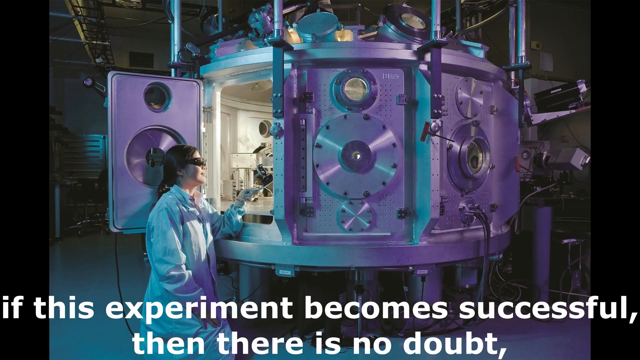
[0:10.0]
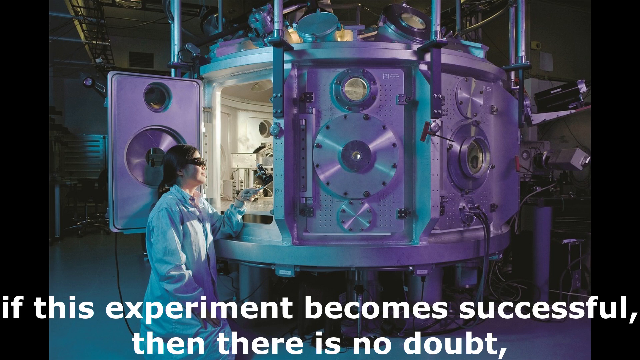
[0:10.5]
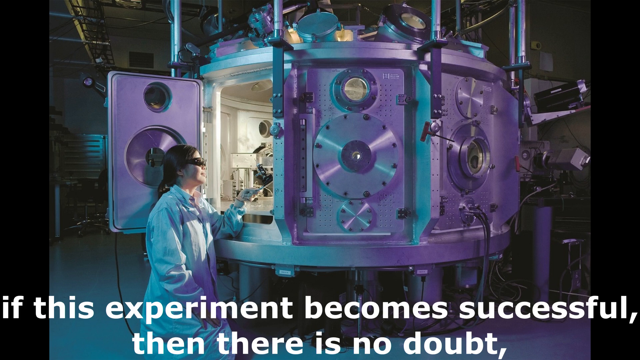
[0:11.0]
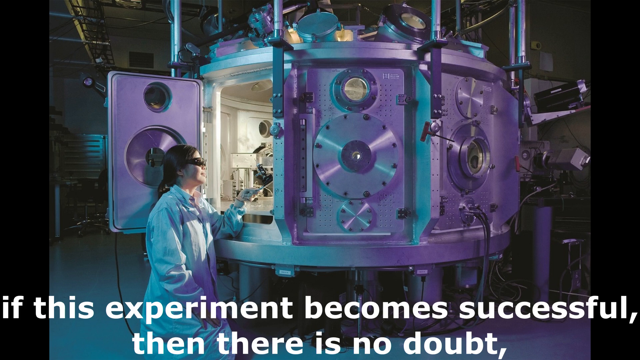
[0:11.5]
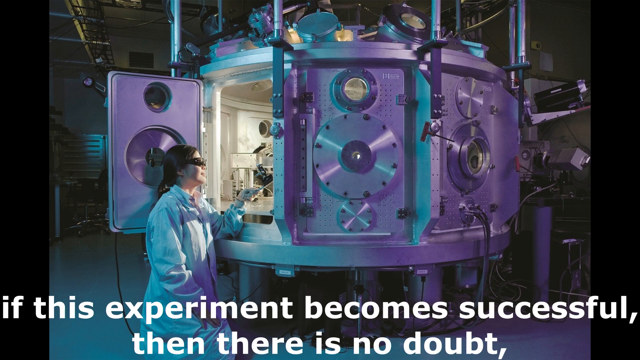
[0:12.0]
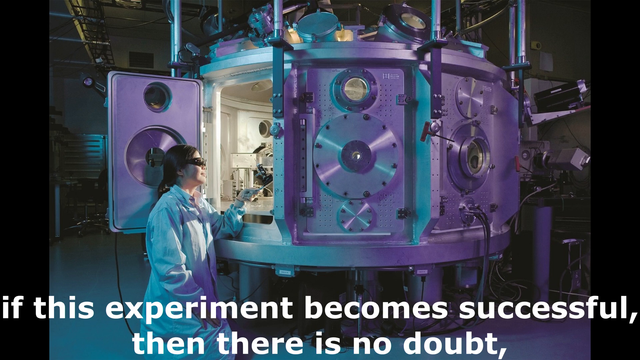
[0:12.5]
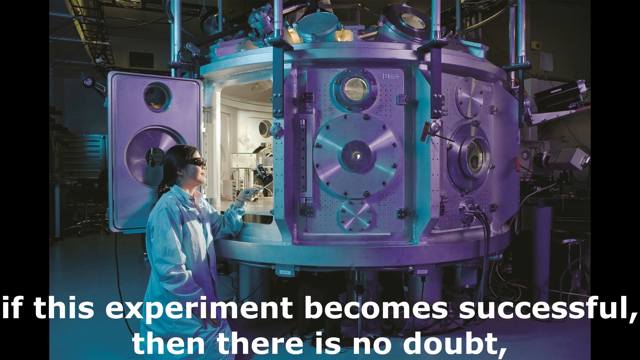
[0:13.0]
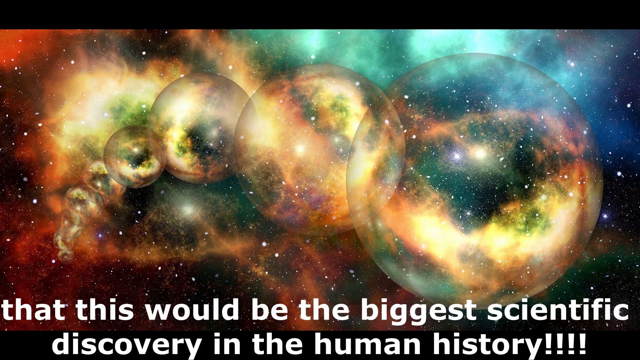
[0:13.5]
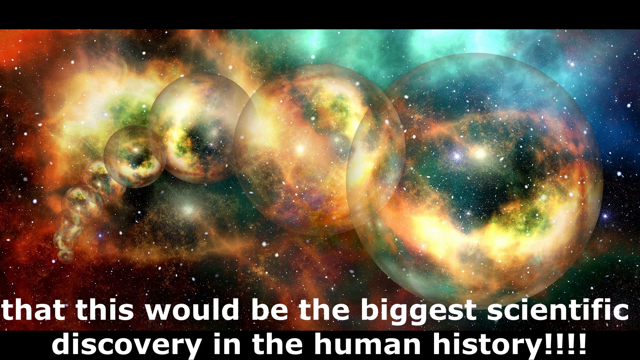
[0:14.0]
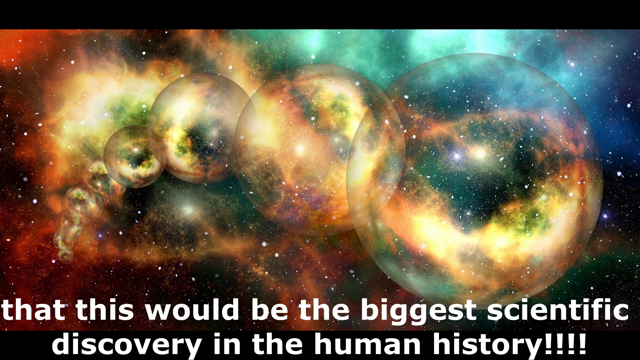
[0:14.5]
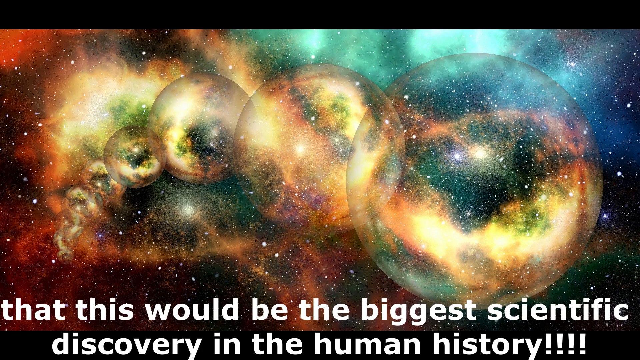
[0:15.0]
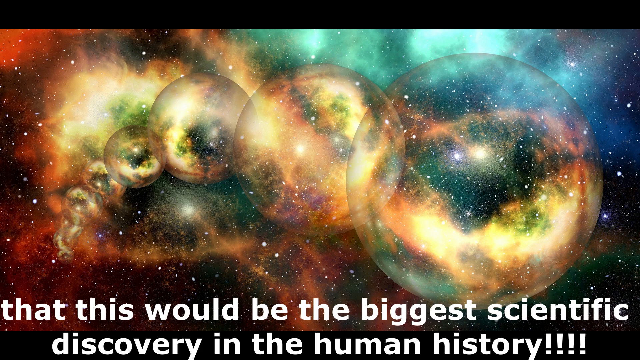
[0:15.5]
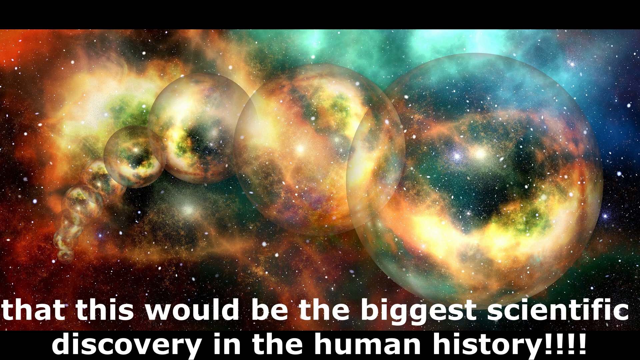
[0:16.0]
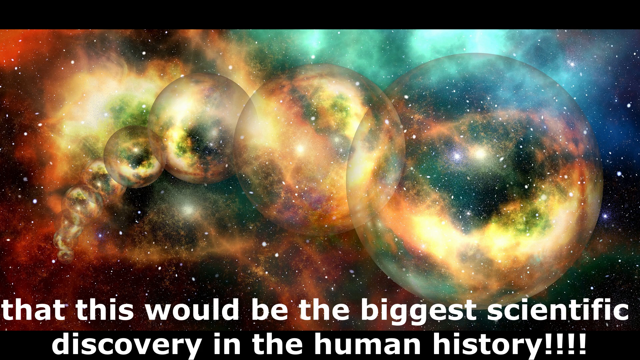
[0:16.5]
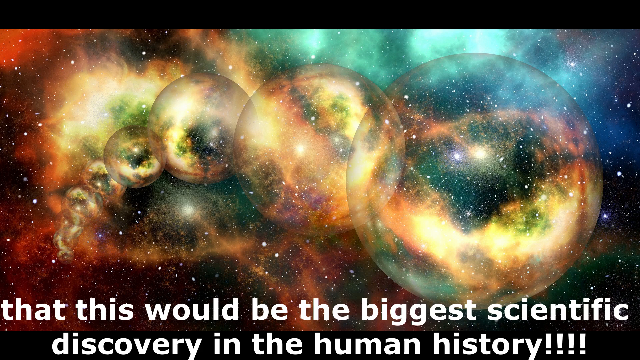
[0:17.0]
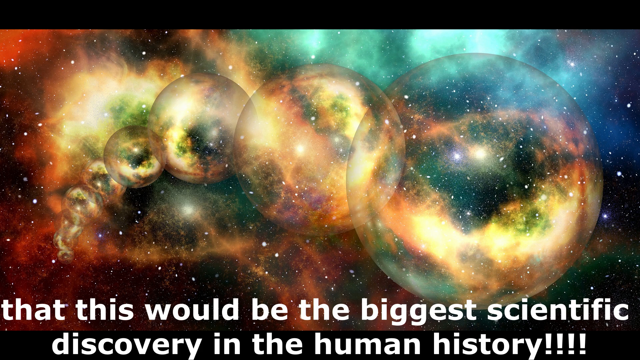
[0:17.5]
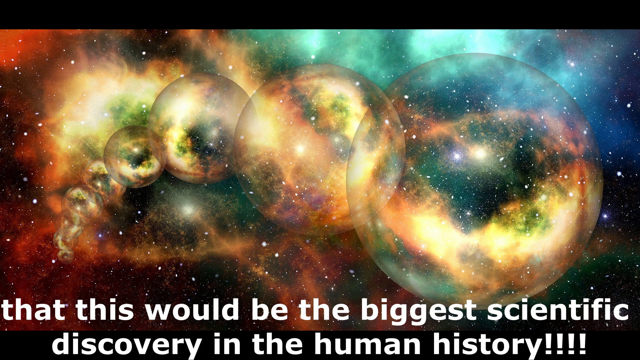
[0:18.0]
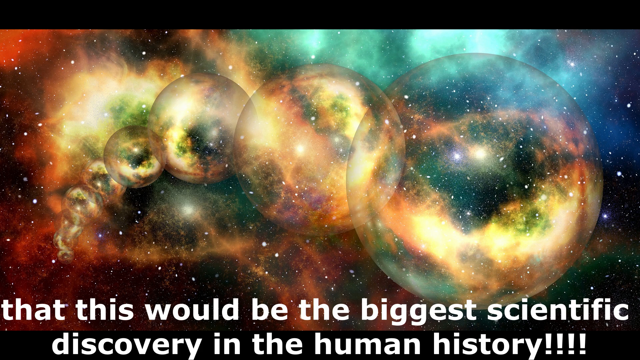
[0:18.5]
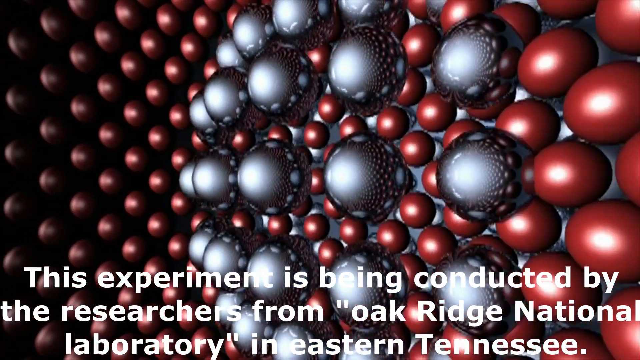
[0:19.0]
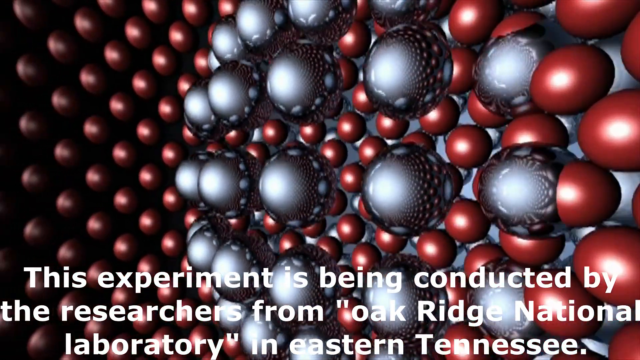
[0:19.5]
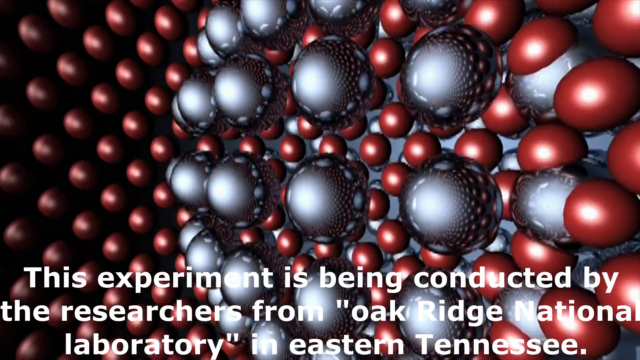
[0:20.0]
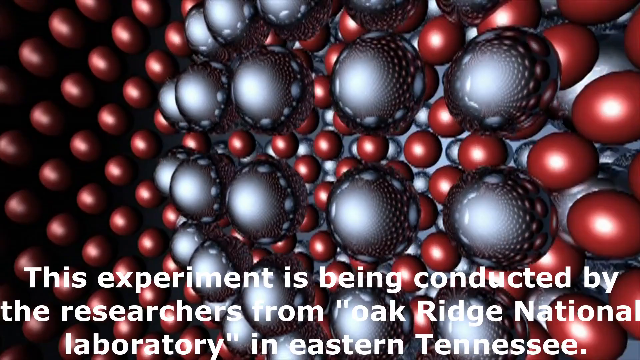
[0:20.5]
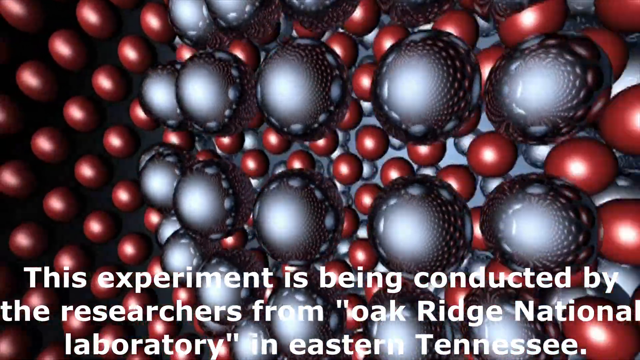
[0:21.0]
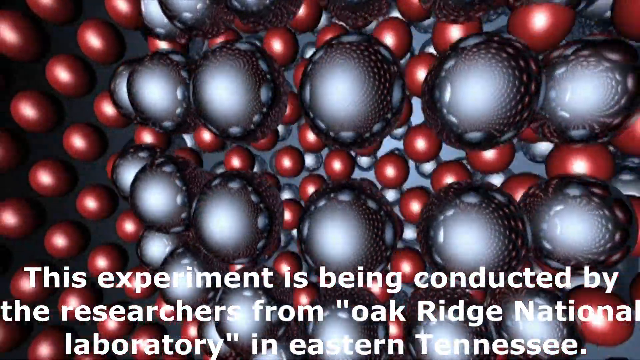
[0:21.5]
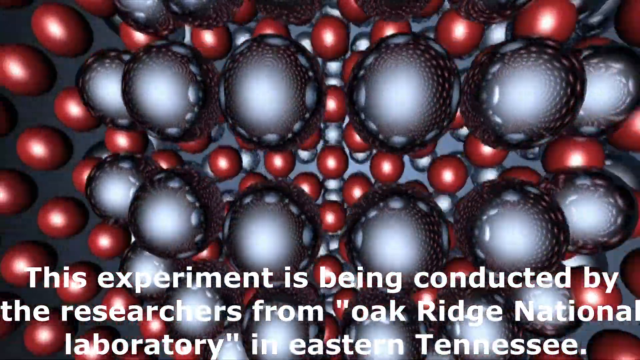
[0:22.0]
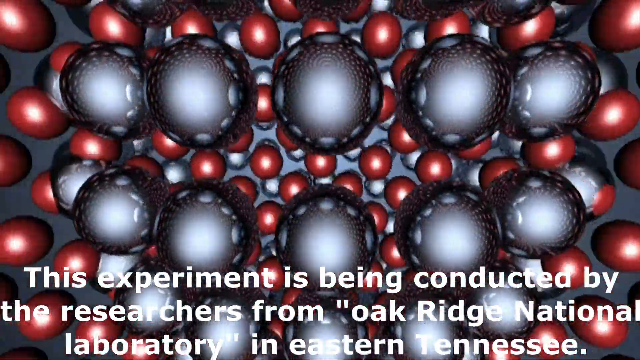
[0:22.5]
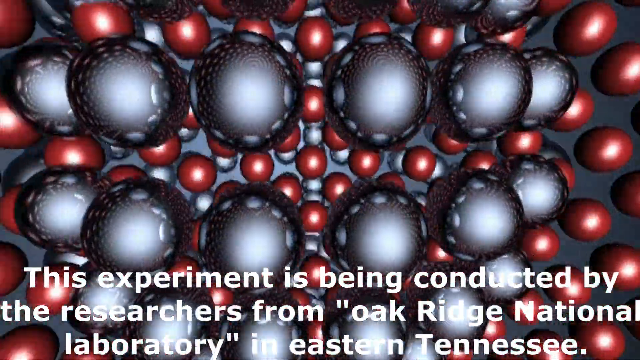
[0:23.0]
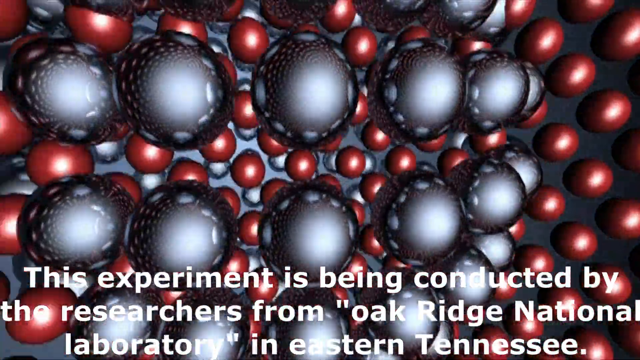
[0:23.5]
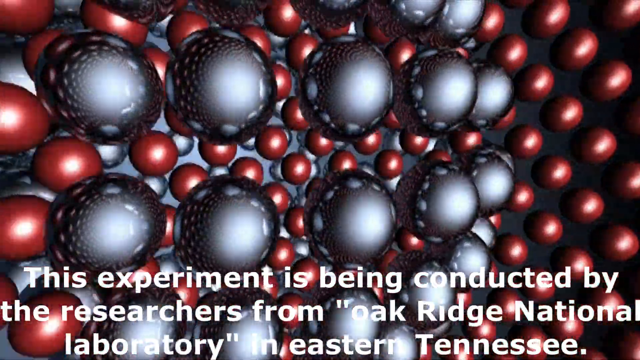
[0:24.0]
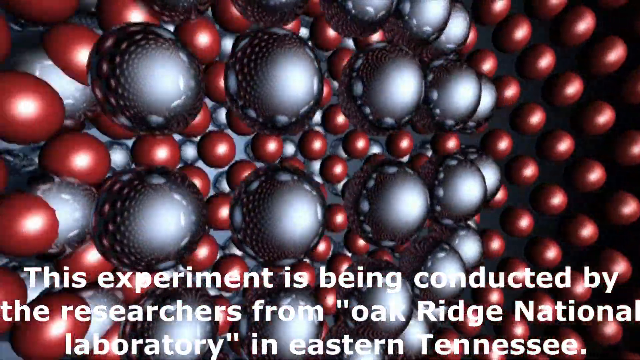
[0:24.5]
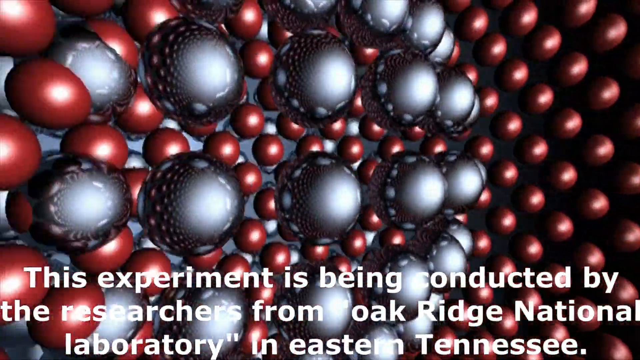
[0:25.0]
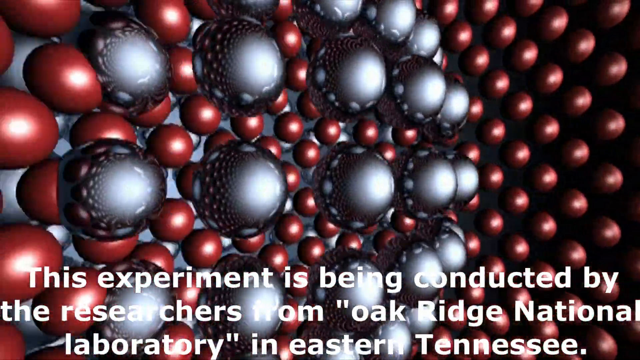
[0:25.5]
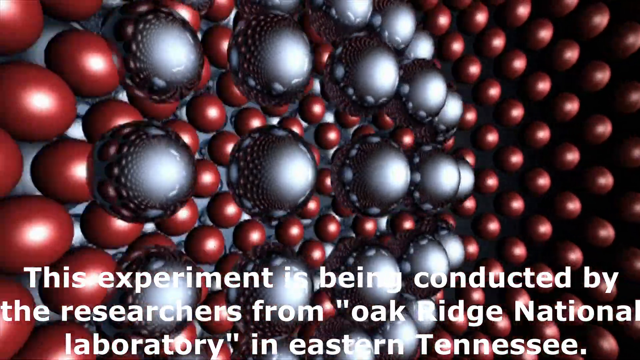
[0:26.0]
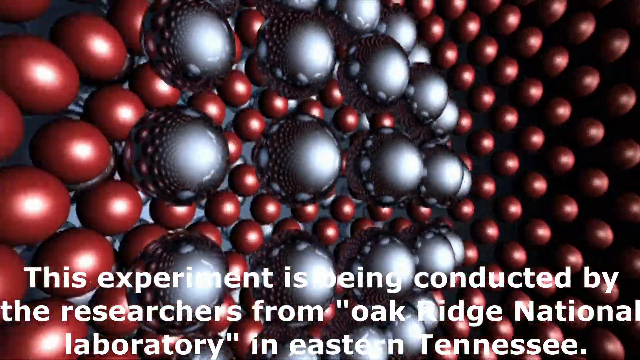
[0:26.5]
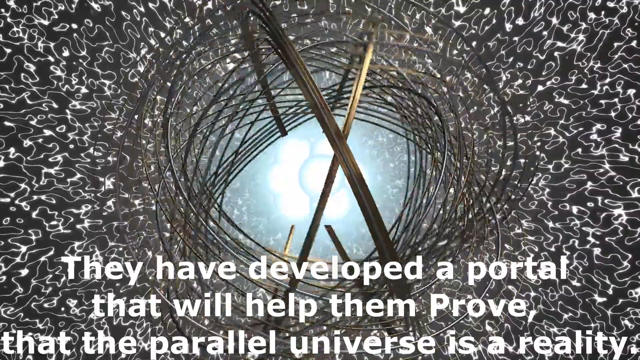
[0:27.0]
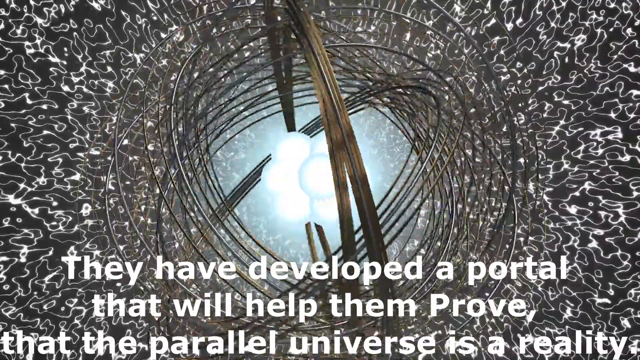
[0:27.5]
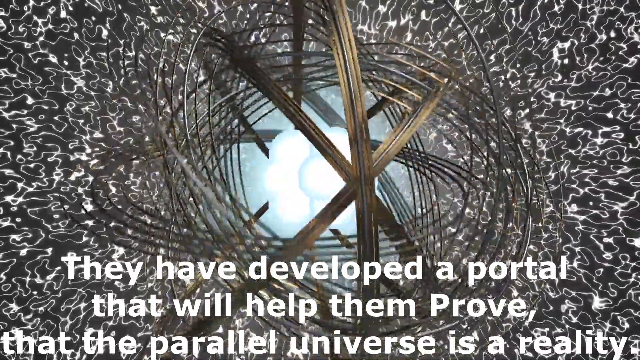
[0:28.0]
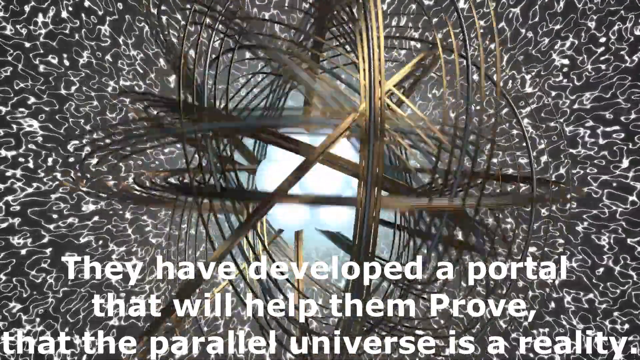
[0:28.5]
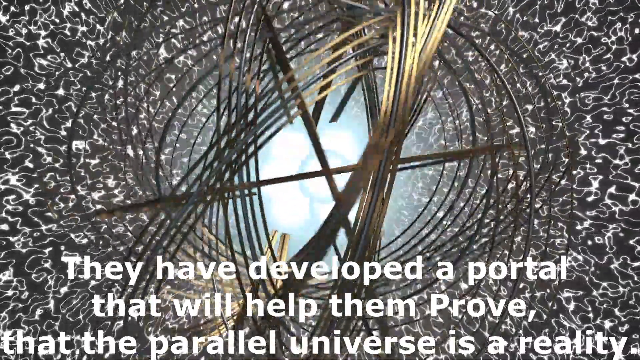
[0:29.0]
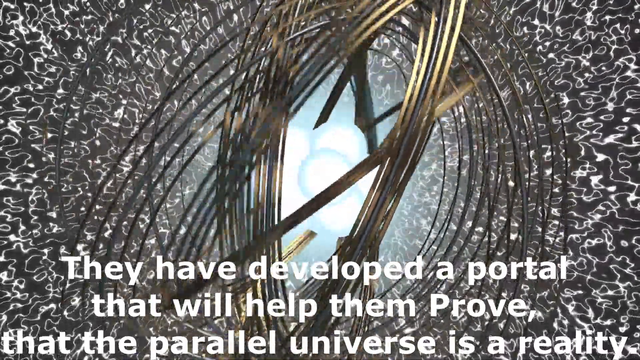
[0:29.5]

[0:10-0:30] The scene changes to a woman on the left side looking inside a very large mechanical structure whose door she has open. She is a scientist wearing a white lab coat and dark safety eyeglasses, and her left arm is inside the big machine. She is in some sort of laboratory with a bunch of mechanical equipment. Captions at the bottom read: "If this experiment becomes successful, then there is no doubt." The captions and the picture change, and the captions now say that "this would be the biggest scientific discovery in the human history." The picture shows outer space with a whole bunch of spheres in a line: on the right they appear very large and close, and they get smaller toward the left. Outer space looks very colorful, with blue and turquoise colors in the top right corner, red and yellow colors to the left, and stars scattered throughout. The picture changes to a whole bunch of moving red and silver balls, and the captions at the bottom now say: "this experiment is being conducted by the researchers from Oak Ridge National Laboratory eastern Tennessee." The scenery changes again to a very abstract view of what looks like a molecule or an atom rotating, very bright in the middle like a big giant ball of light, with a whole bunch of squiggly white and black colors in the background.